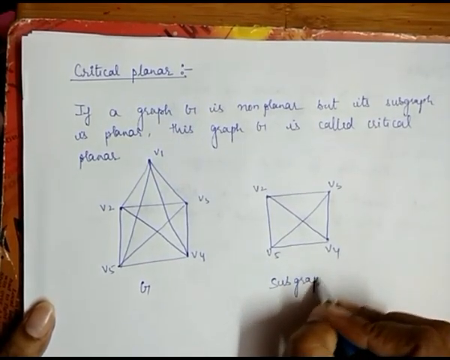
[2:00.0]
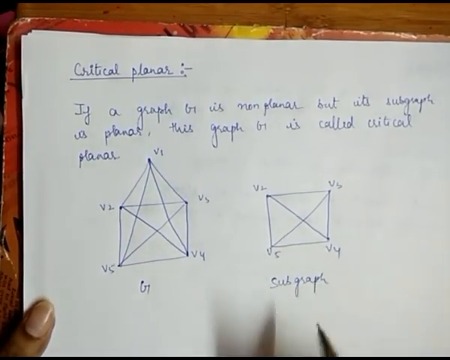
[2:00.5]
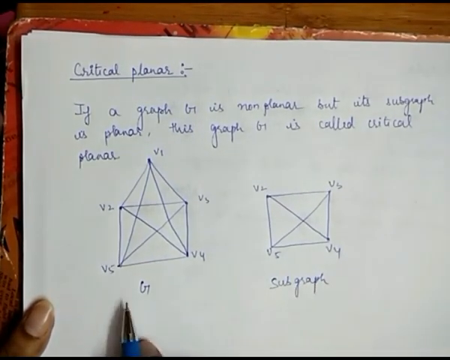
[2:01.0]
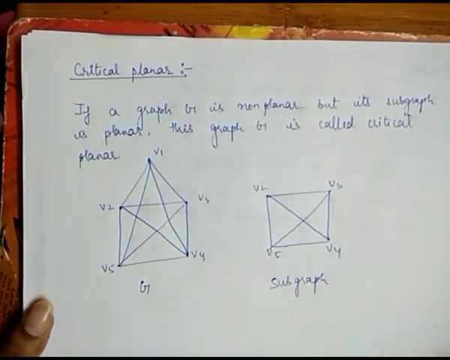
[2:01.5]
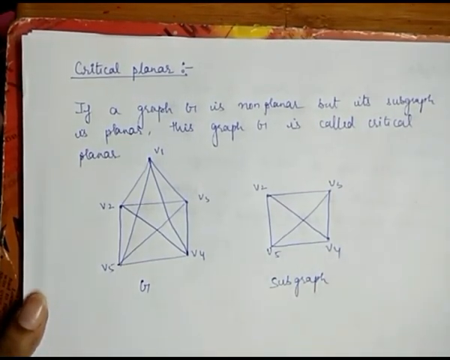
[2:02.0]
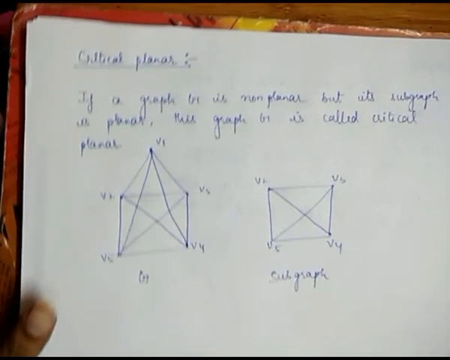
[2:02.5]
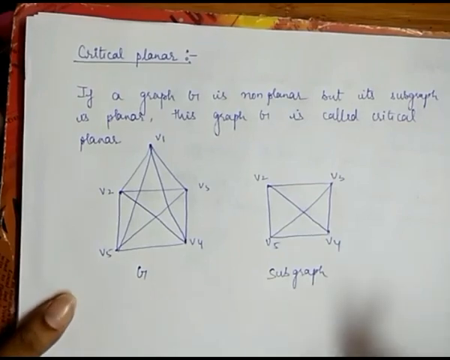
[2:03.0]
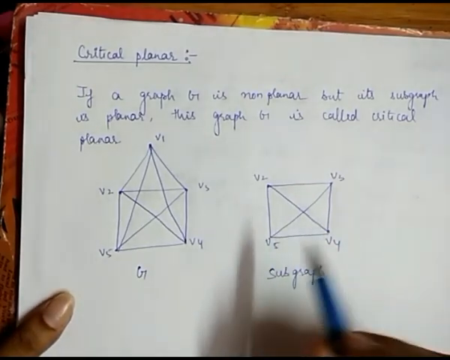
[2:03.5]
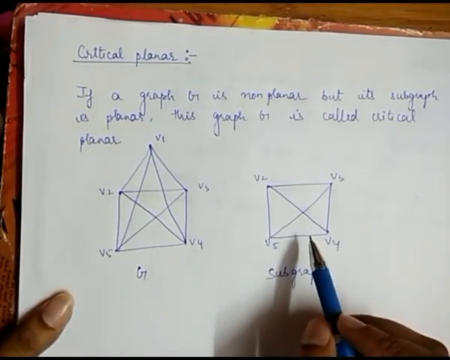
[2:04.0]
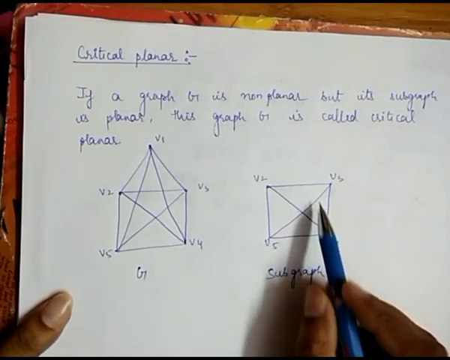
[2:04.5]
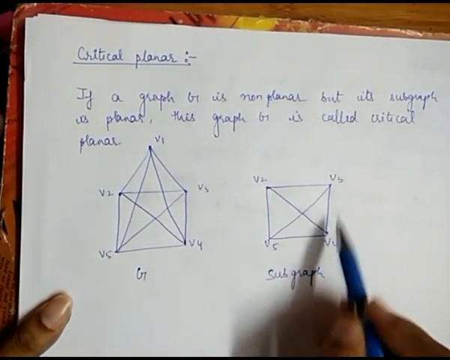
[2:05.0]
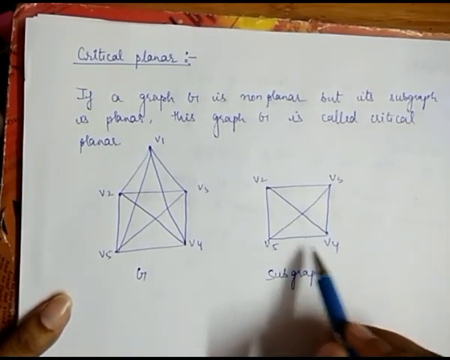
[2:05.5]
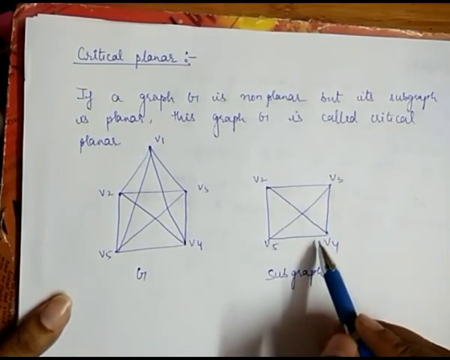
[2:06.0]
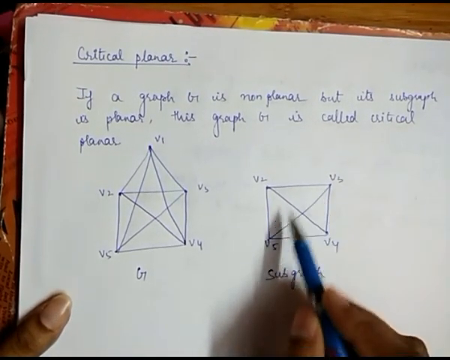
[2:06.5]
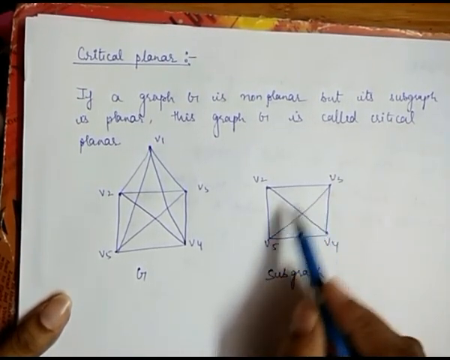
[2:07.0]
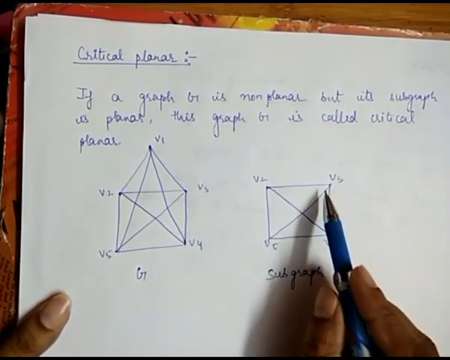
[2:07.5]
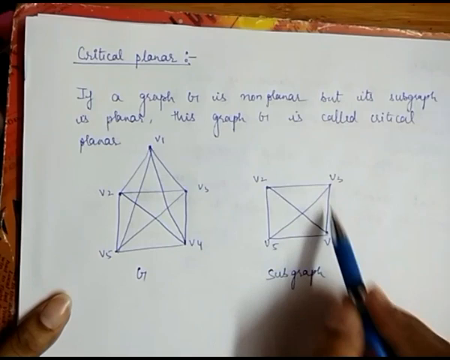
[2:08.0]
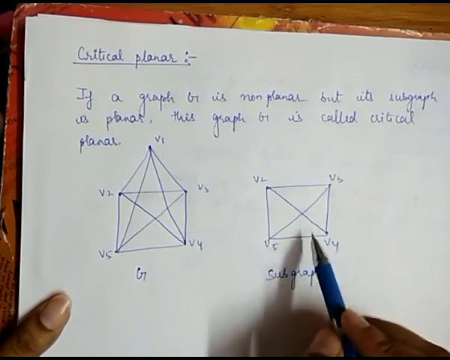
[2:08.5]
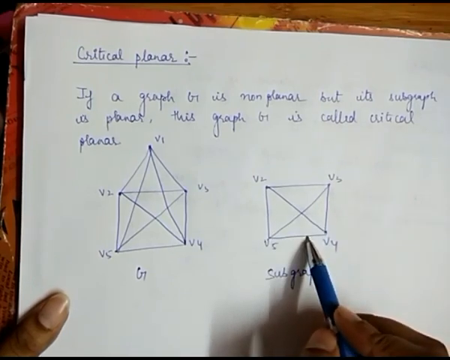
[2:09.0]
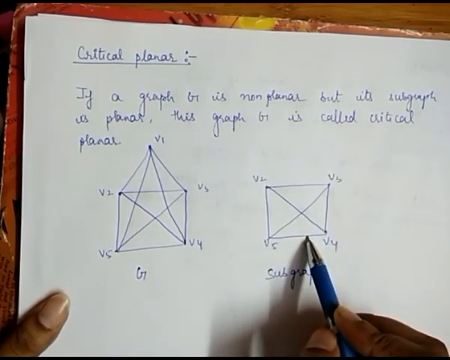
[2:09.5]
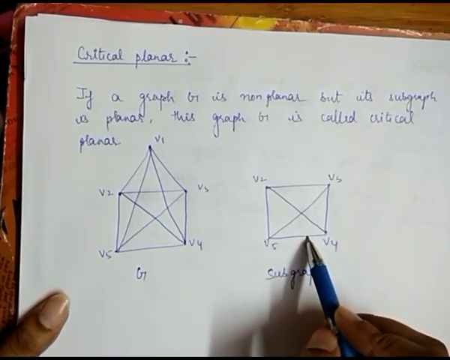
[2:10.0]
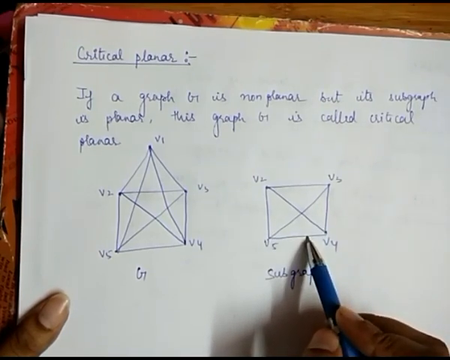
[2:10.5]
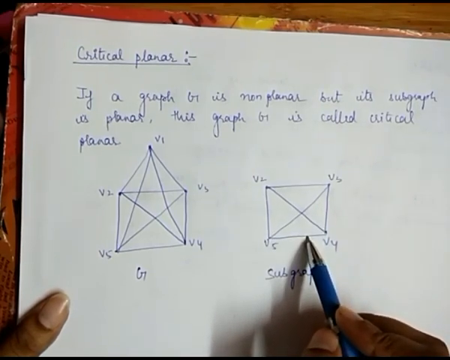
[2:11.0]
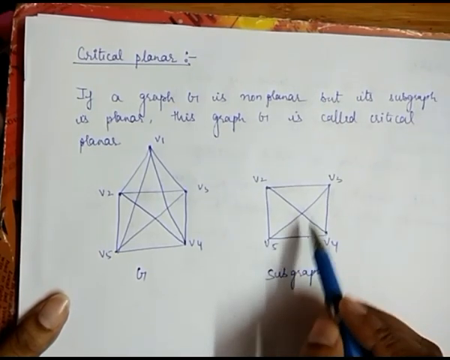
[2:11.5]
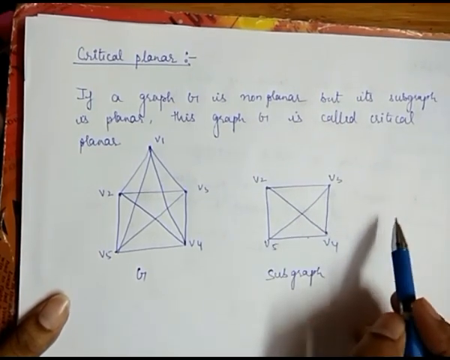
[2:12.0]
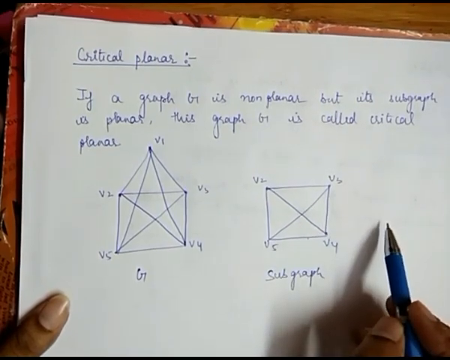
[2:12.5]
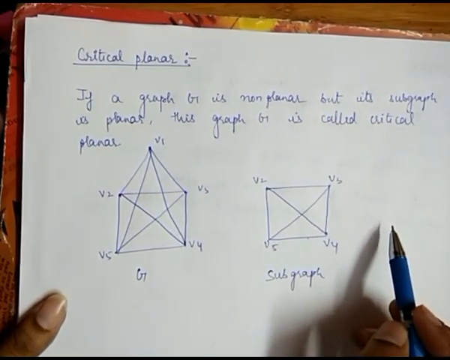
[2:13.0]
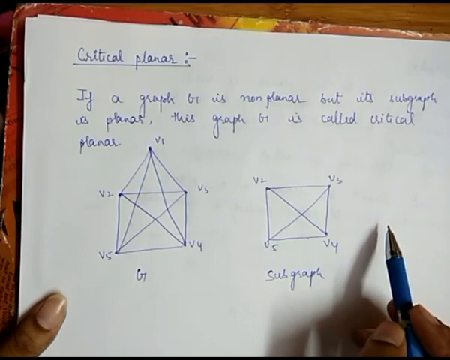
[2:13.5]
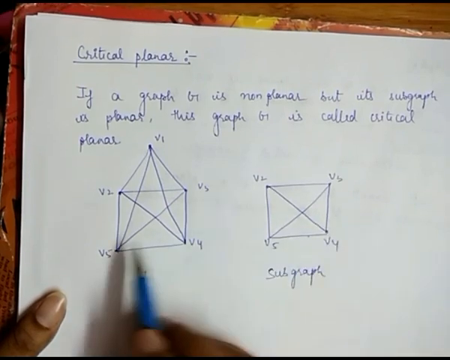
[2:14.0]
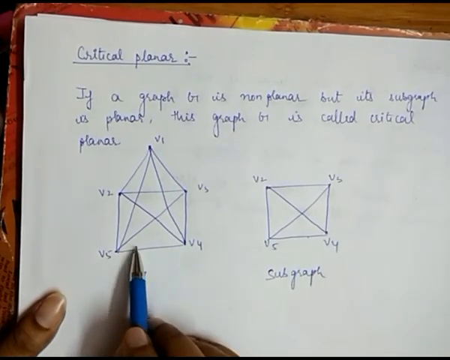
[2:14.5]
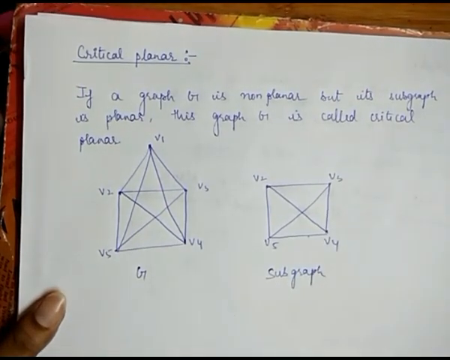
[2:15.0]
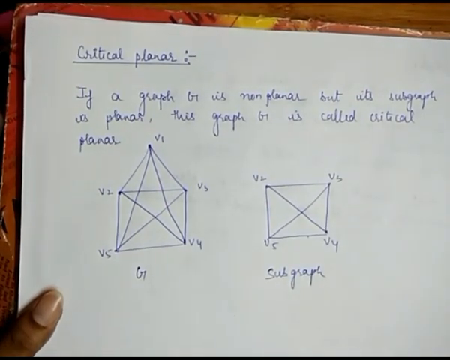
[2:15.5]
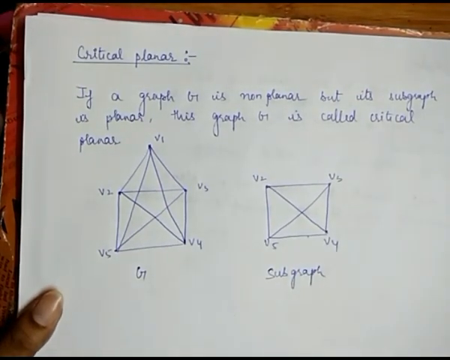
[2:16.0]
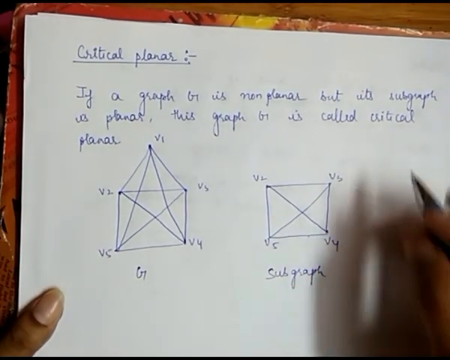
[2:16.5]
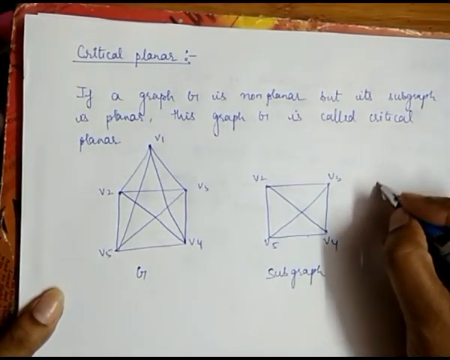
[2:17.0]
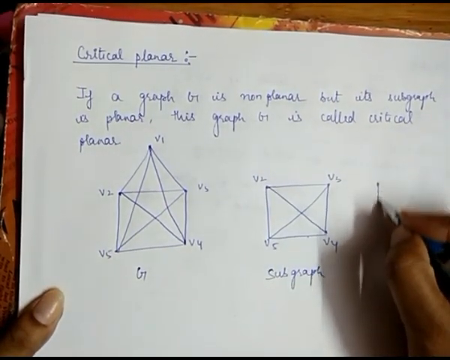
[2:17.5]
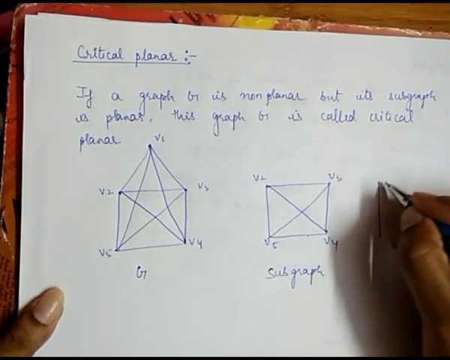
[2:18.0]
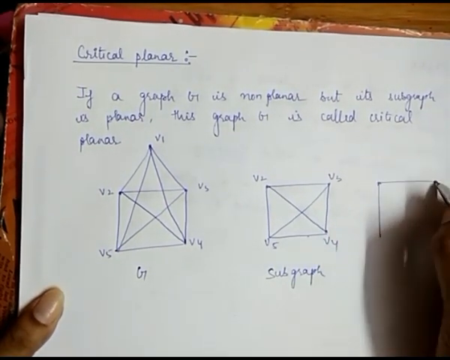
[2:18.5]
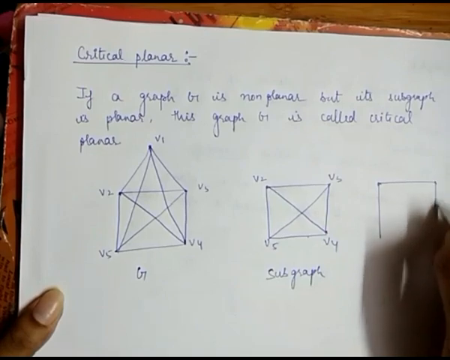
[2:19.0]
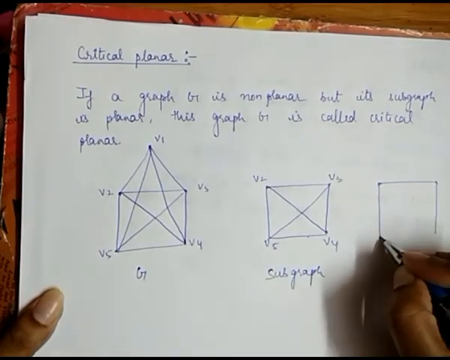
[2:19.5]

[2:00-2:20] The woman finishes labeling the second square "subgraph". She points her pen at the G under the other drawing and then back to "subgraph", then pulls her right hand off screen. Her left thumb in the bottom left corner moves to reposition and restabilize the paper on the mat as it moves on the table. Her right hand comes back in with the pen from the bottom right-hand corner and points out different sections of the subgraph, pointing at the bottom section between V5 and V4 and then between V4 and V3, and drawing a counterclockwise circle in the air several times. She points her pen at the bottom of that square, hops it over to the right side of the paper next to the subgraph, and then hops it to where V5 is on her G drawing. Her hand with the pen goes completely off screen in the lower left-hand corner, then comes back in from the left and moves up to the right next to the subgraph, where she draws lines from the upper left to the lower left, from the upper left to the upper right, from the upper right to the lower right, and from the lower left to the lower right to make another square.